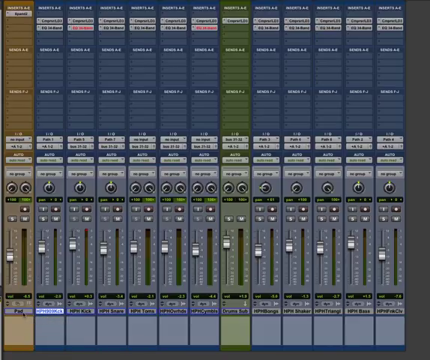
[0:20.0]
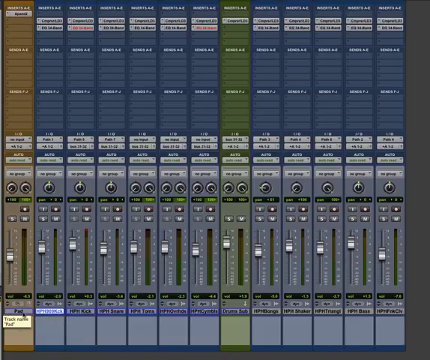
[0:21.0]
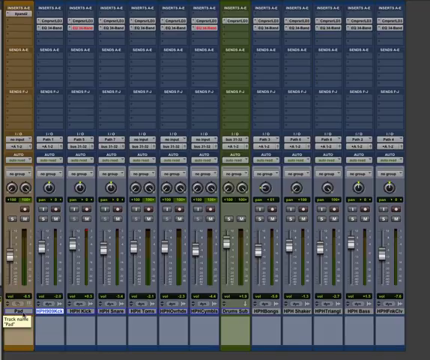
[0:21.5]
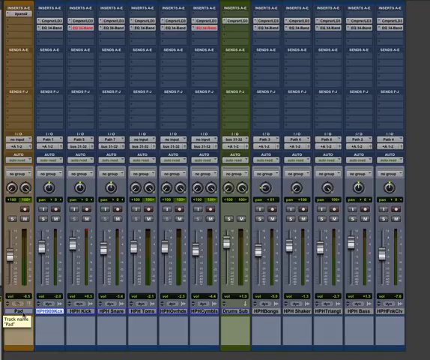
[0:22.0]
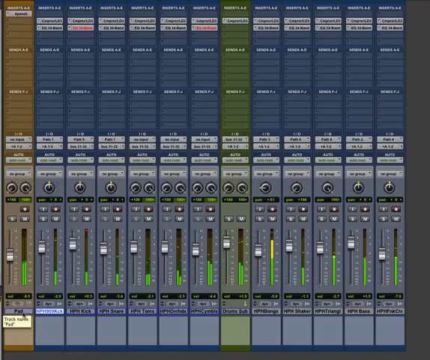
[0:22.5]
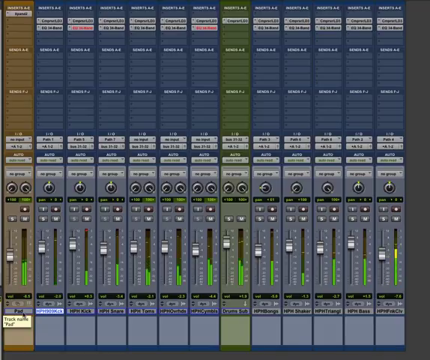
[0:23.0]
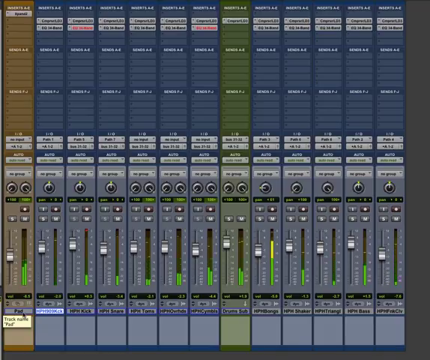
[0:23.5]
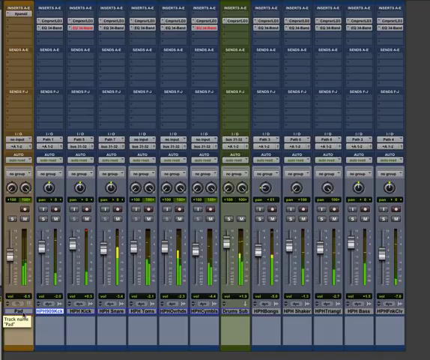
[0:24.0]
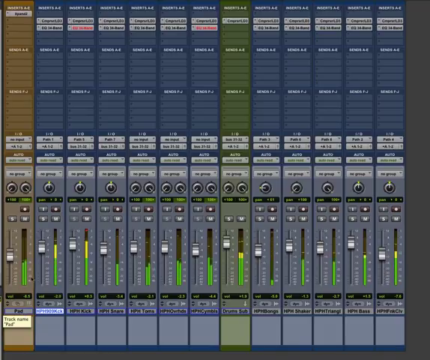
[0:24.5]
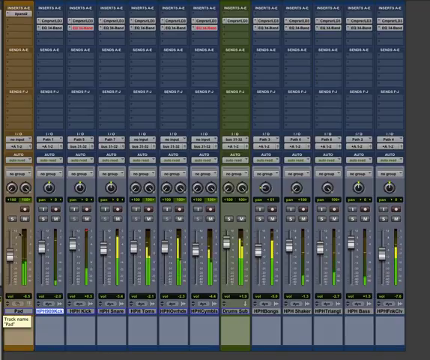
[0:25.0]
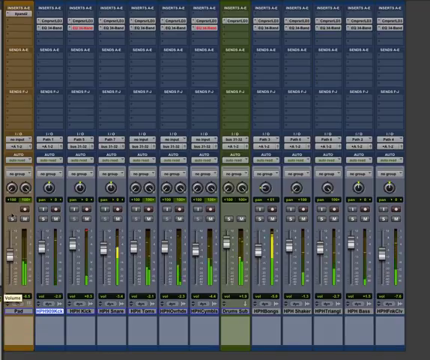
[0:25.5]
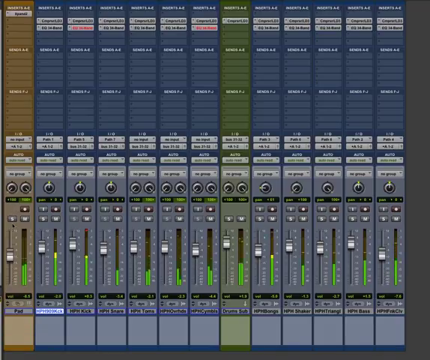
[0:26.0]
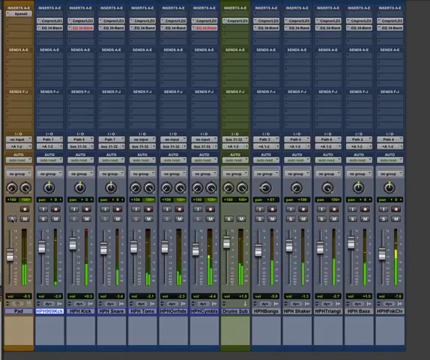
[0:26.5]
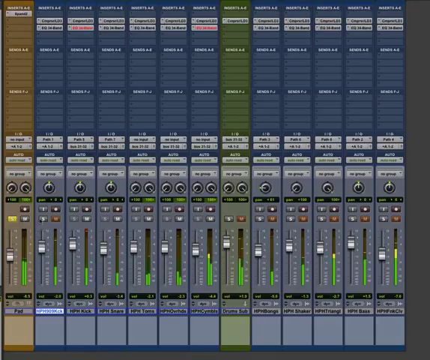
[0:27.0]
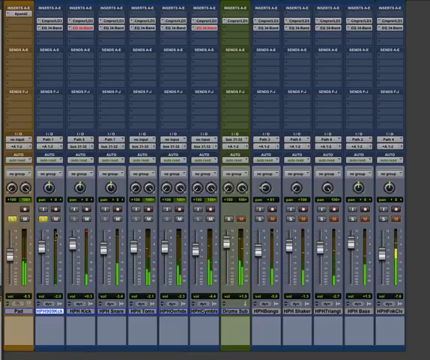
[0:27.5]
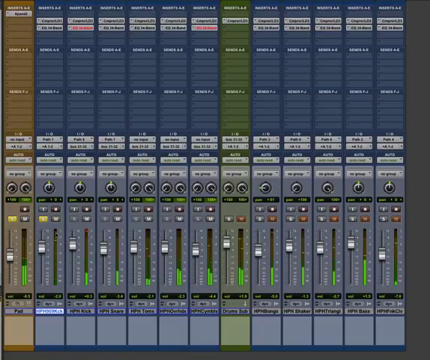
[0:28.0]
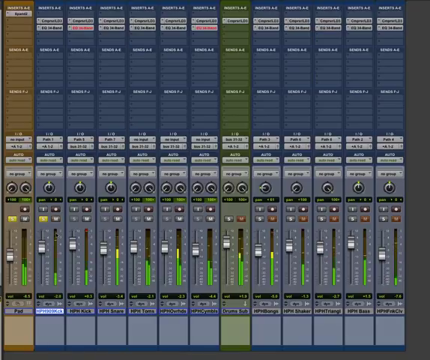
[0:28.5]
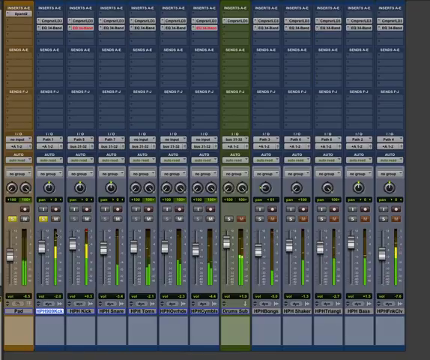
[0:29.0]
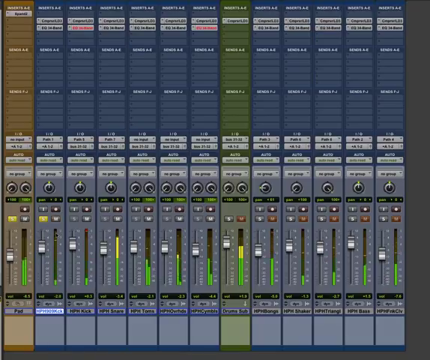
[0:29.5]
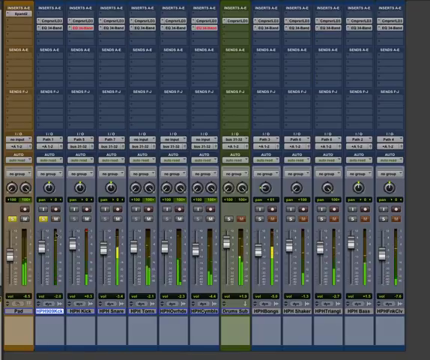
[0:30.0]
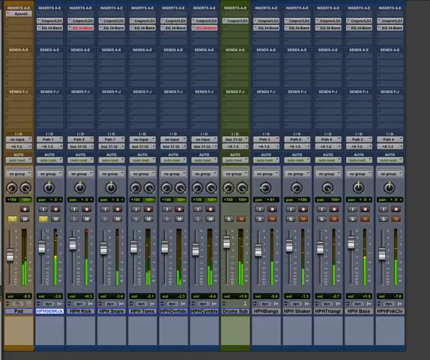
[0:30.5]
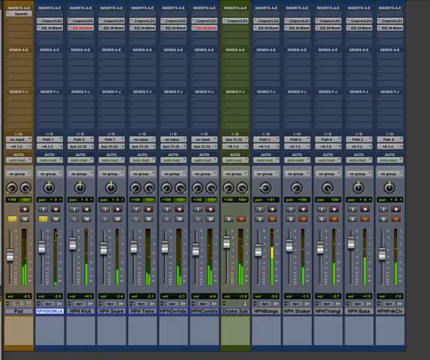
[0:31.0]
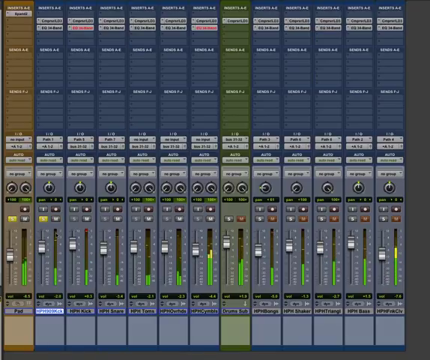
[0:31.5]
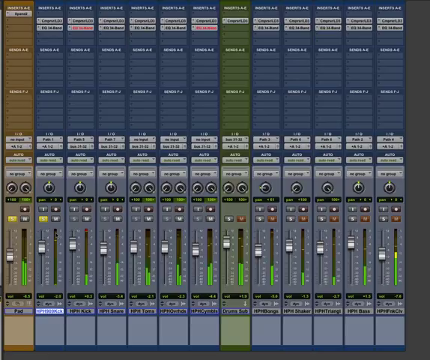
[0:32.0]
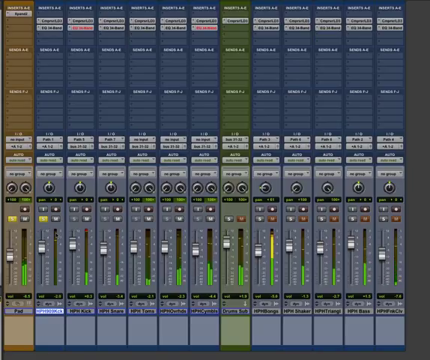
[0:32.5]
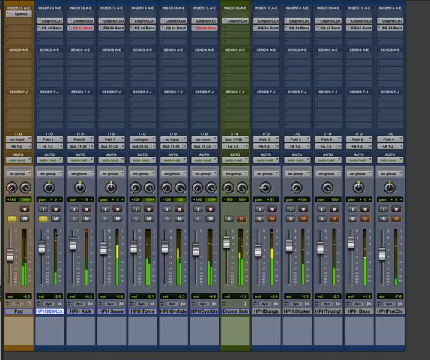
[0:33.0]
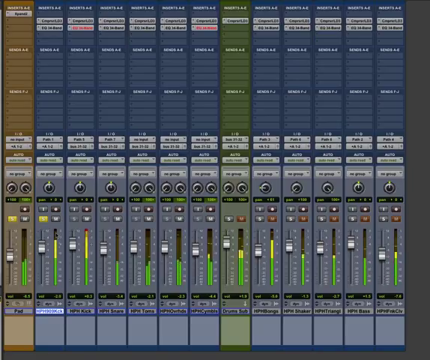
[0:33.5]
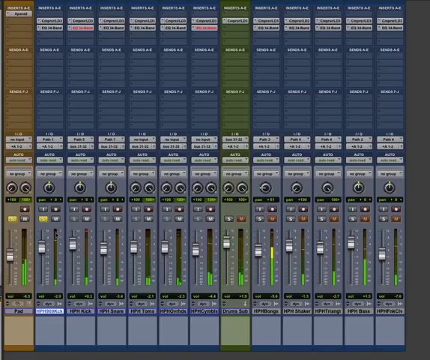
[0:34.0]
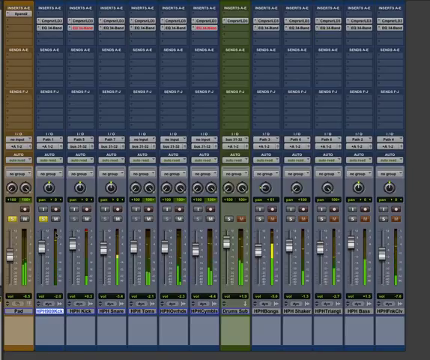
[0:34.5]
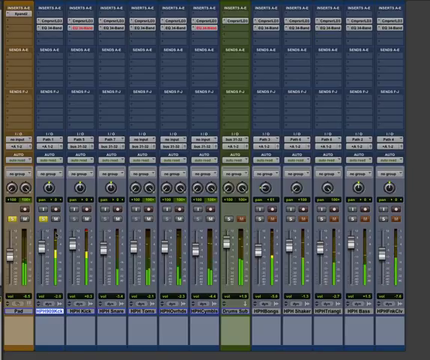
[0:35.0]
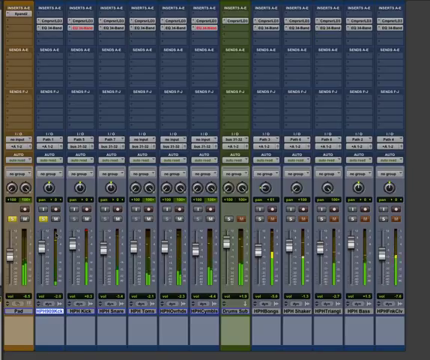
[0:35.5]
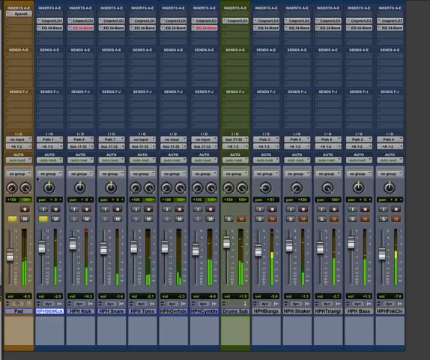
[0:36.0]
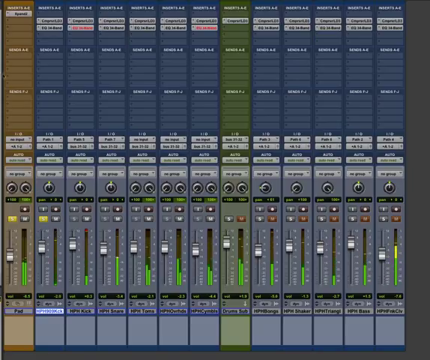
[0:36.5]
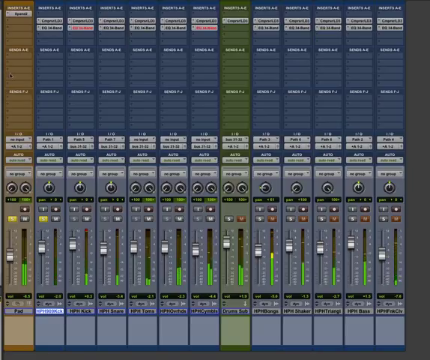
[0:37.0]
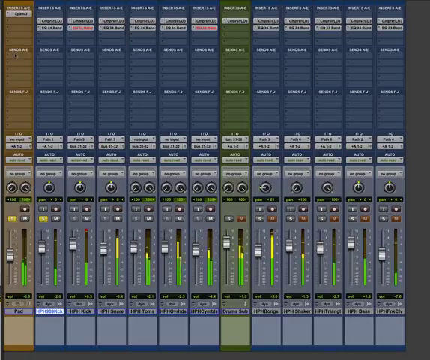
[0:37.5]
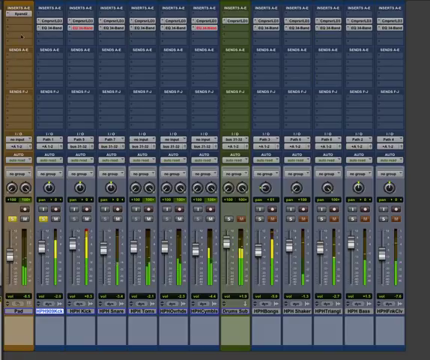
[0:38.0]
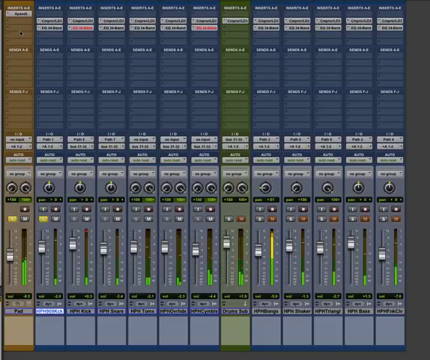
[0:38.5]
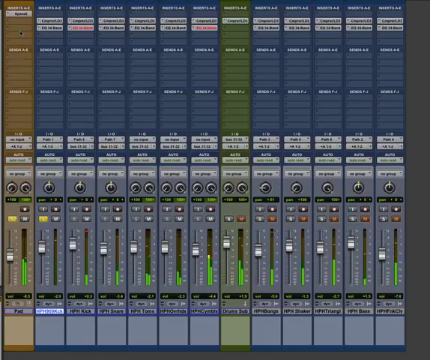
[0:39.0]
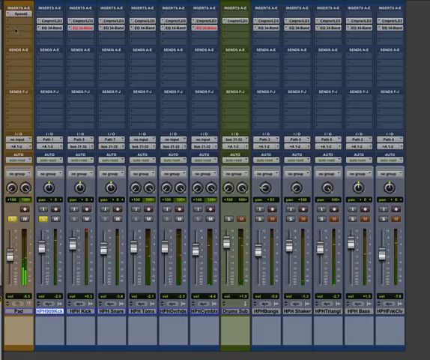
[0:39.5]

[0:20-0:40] The video opens with the words "side chain compression in Pro Tools." There is a brown lining at the front, followed by six blue slots and green slots, with little green marks inside them that go up. The person clicks with his mouse on a bunch of different letters reading "compressor levels" and adjusts different buttons; there is a red one and an orange one. Text reads "track," "preset," "auto," and "levels in and out." There are four silver buttons and two more on the side, and "digi rack" appears in white letters. He moves his mouse all over the screen, clicking on different buttons, and opens a tab.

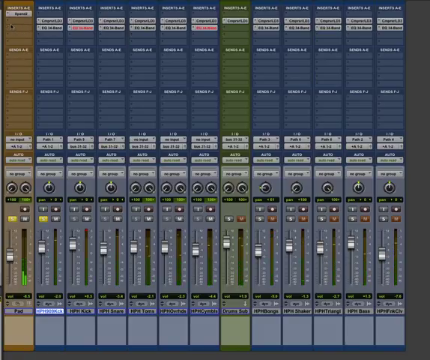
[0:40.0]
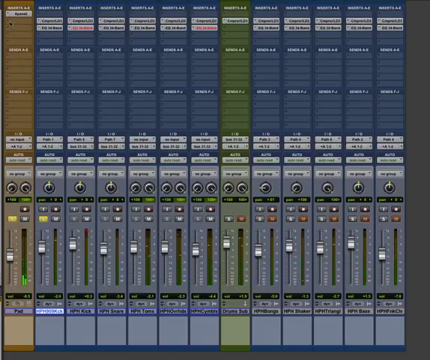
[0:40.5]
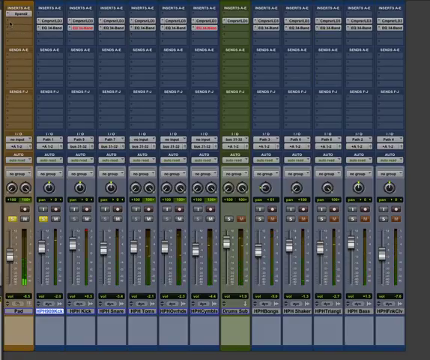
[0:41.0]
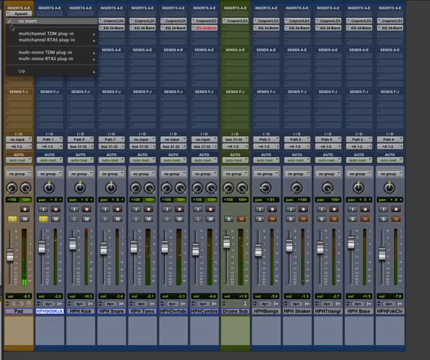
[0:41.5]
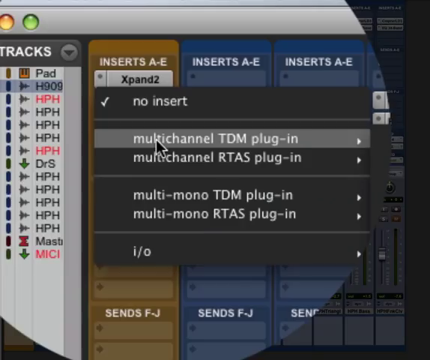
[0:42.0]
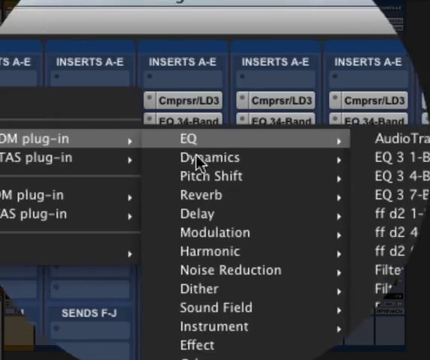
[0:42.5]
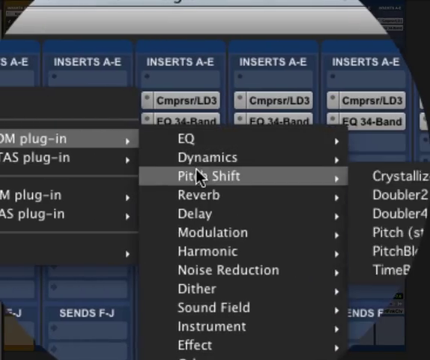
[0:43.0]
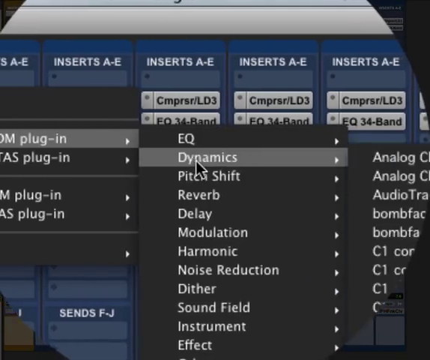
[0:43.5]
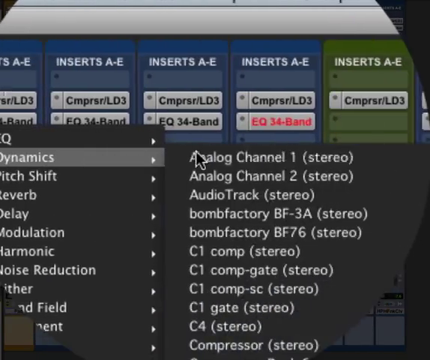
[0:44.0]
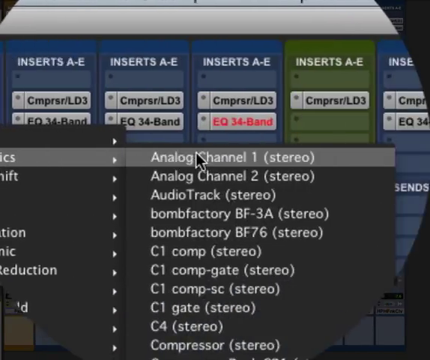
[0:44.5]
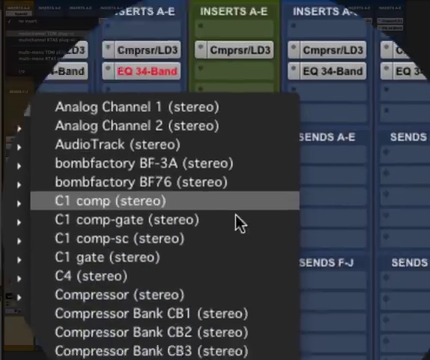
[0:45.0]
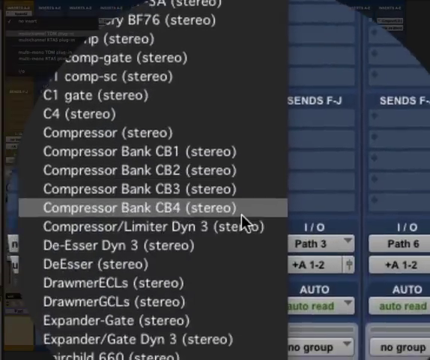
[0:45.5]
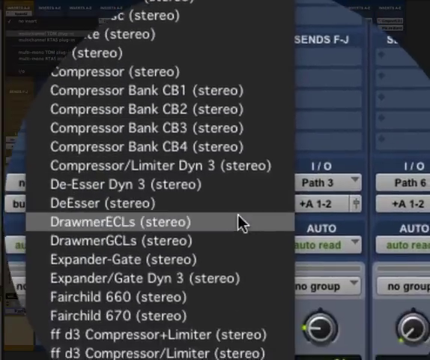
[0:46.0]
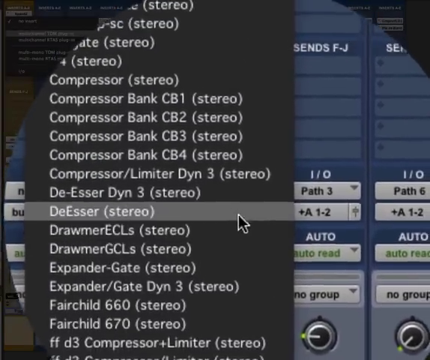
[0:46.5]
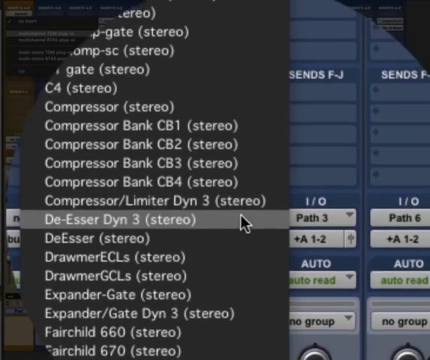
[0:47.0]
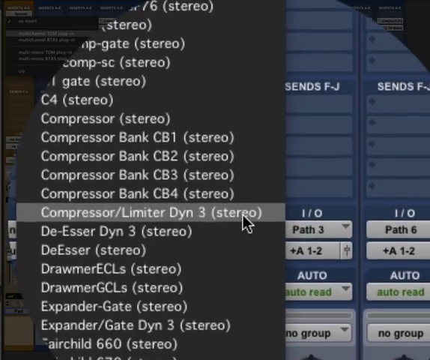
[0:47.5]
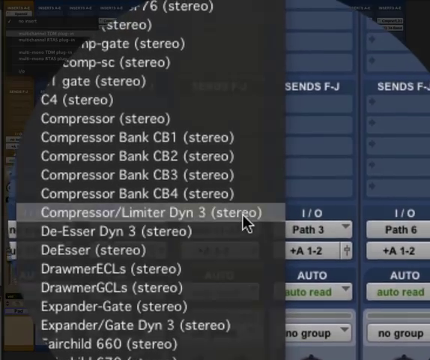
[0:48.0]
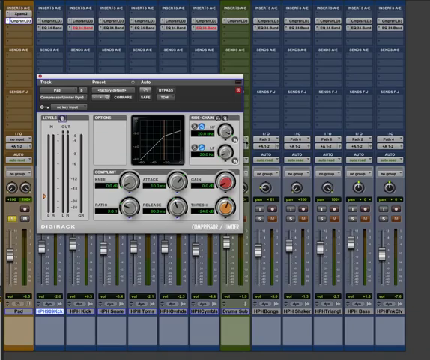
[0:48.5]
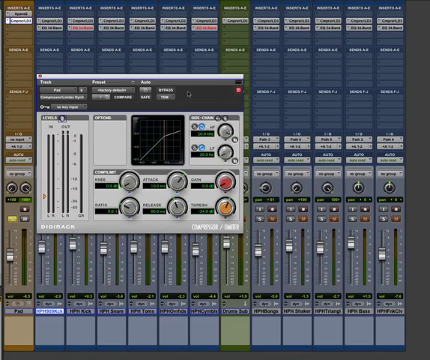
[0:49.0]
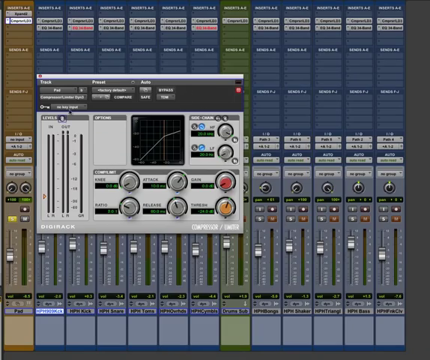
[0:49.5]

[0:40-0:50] The text reads "side chain compression in Pro Tools," with about 15 little buttons below it. The green levels move up and down. He moves his mouse around the first compartment and presses a button, and the little green lines immediately go up in fluorescent green and fluorescent yellow. He presses another button and they shut off. It may be some sort of audio device.